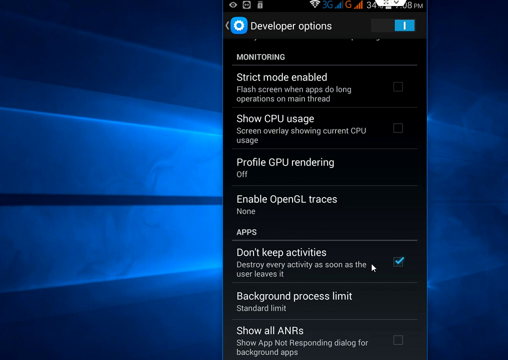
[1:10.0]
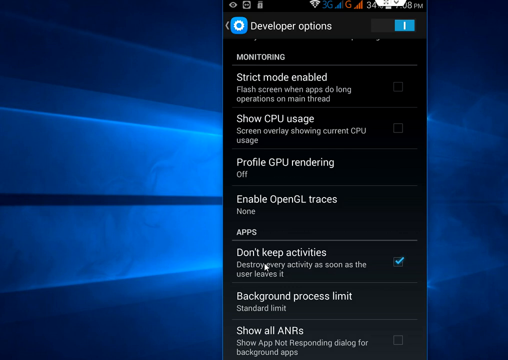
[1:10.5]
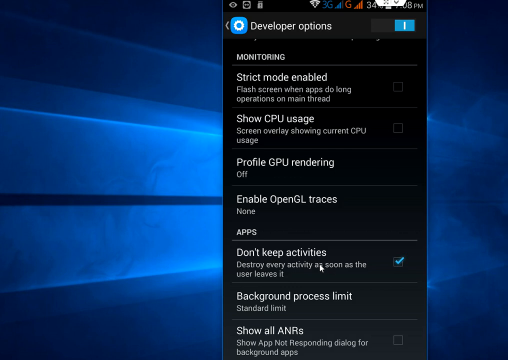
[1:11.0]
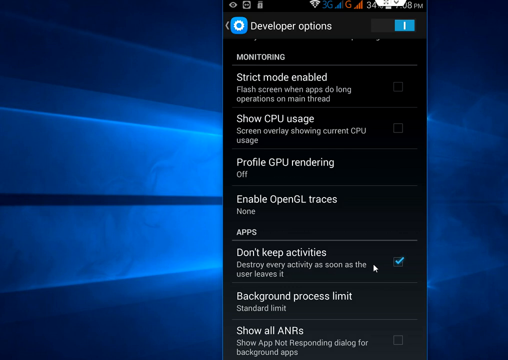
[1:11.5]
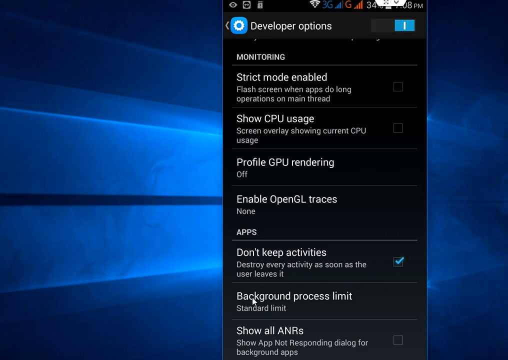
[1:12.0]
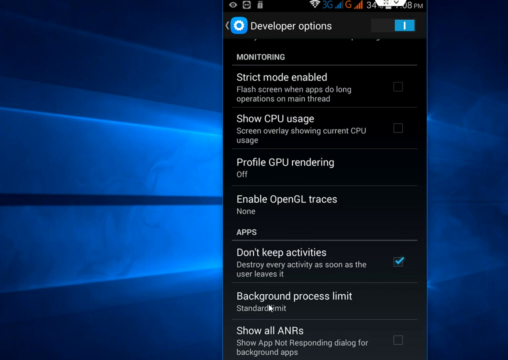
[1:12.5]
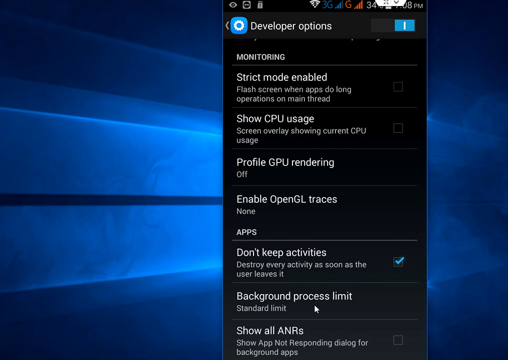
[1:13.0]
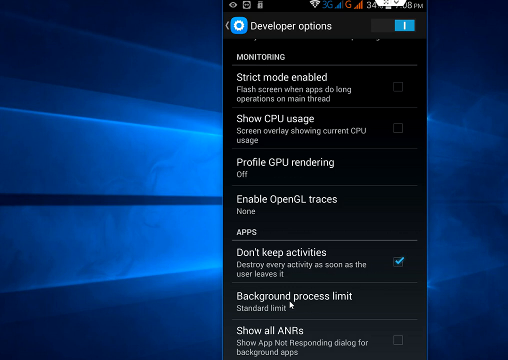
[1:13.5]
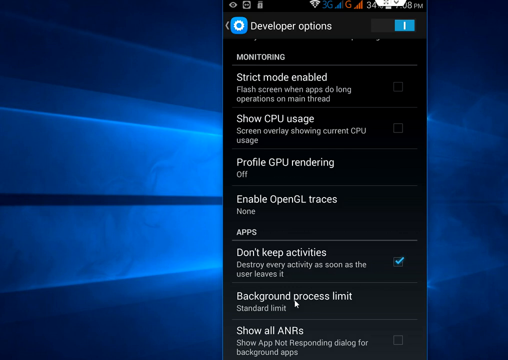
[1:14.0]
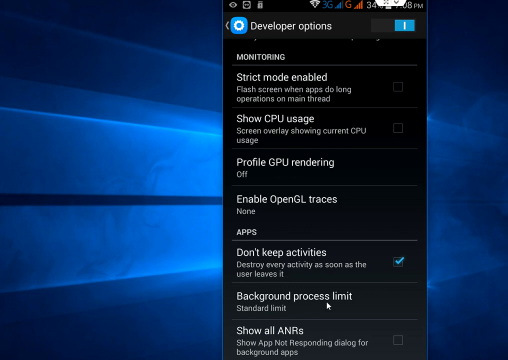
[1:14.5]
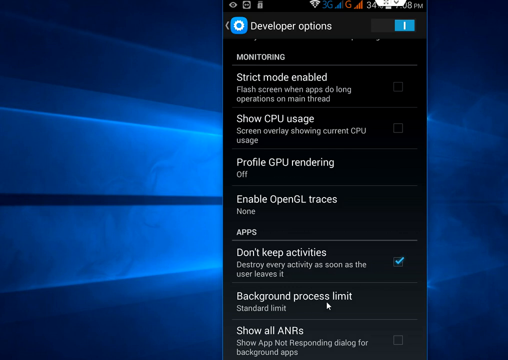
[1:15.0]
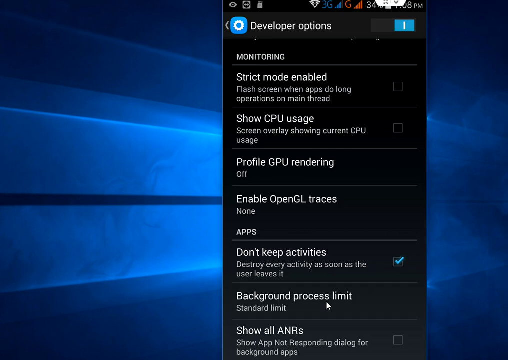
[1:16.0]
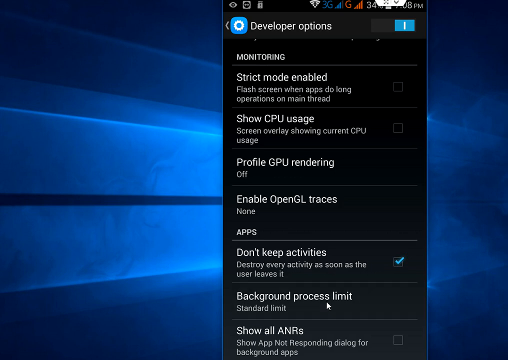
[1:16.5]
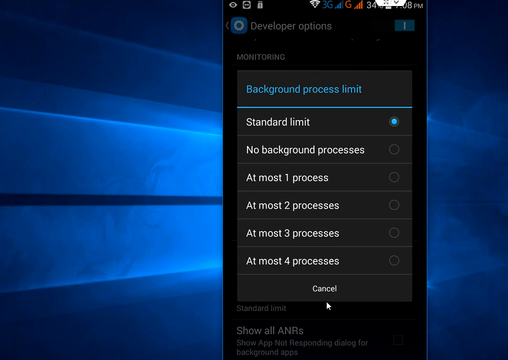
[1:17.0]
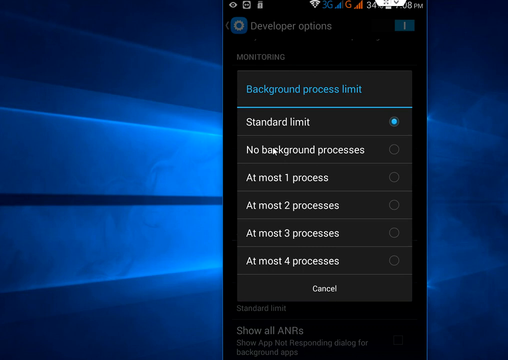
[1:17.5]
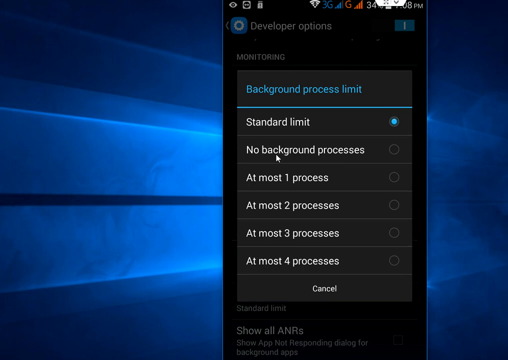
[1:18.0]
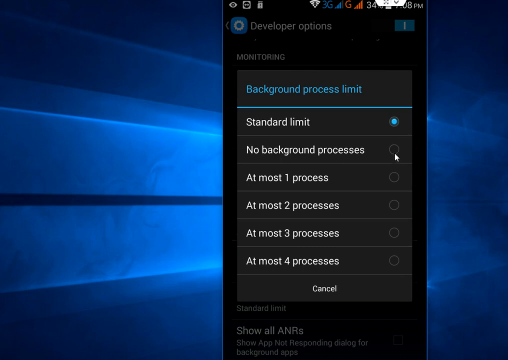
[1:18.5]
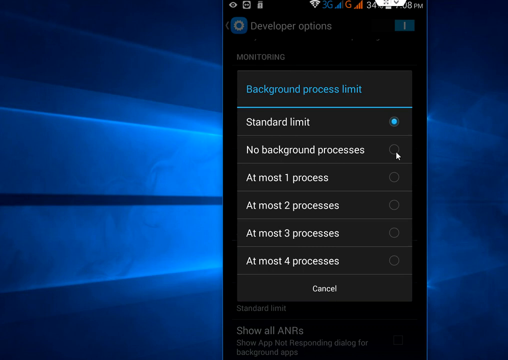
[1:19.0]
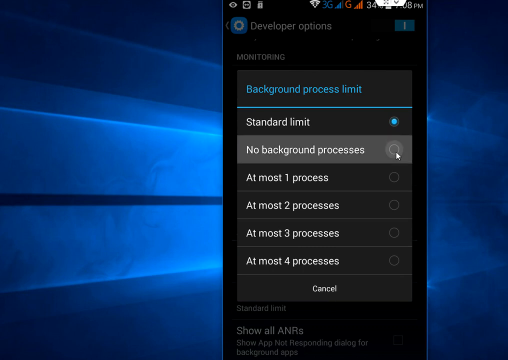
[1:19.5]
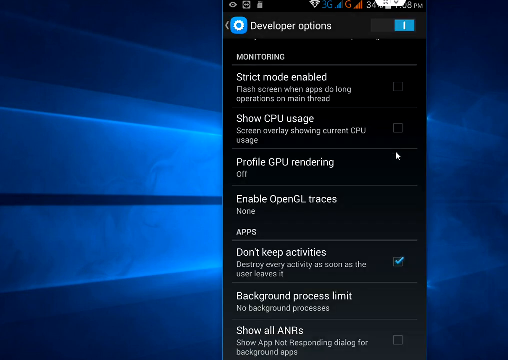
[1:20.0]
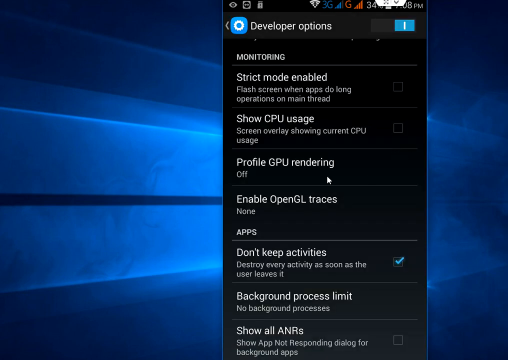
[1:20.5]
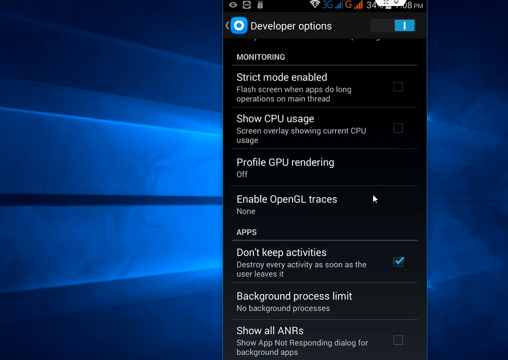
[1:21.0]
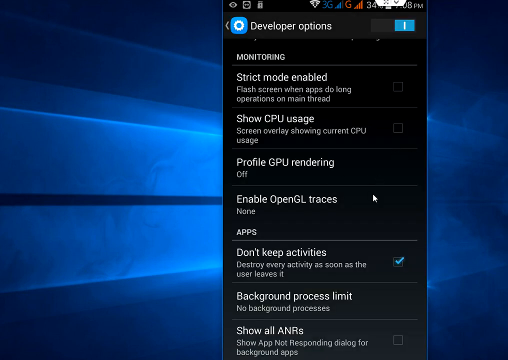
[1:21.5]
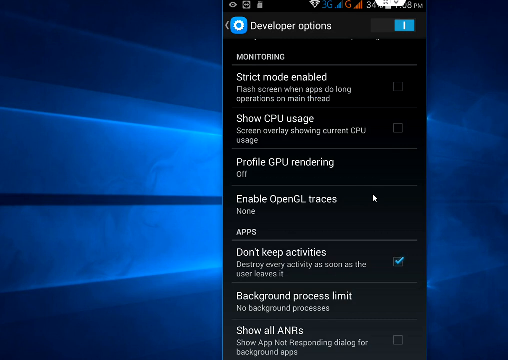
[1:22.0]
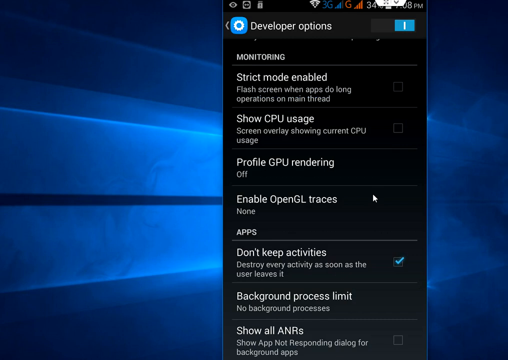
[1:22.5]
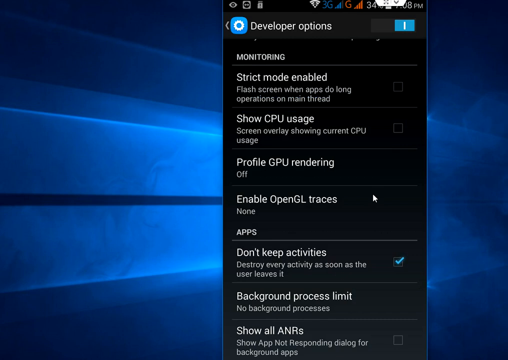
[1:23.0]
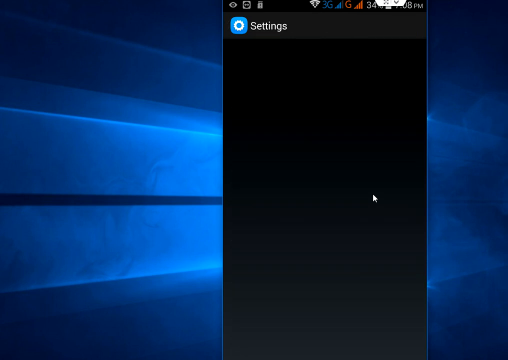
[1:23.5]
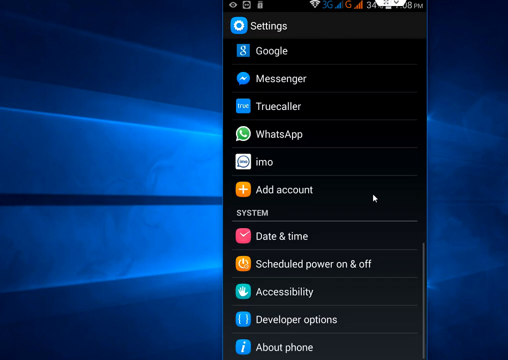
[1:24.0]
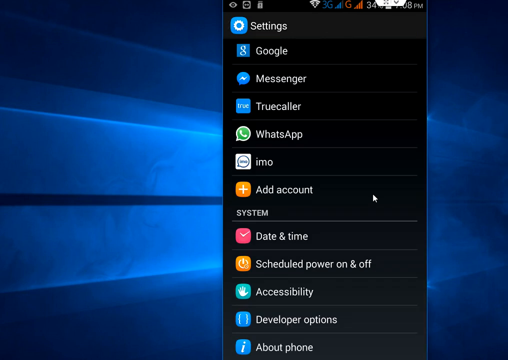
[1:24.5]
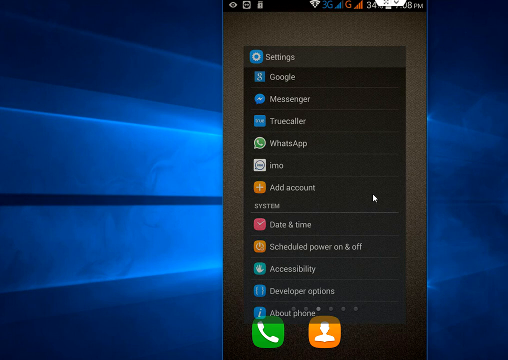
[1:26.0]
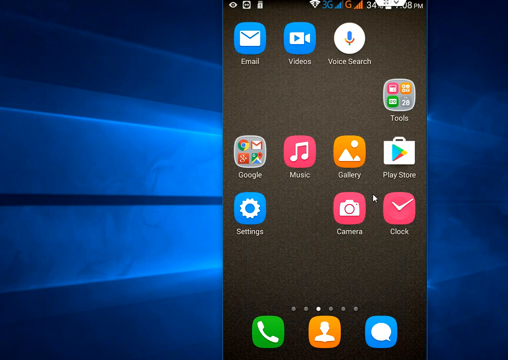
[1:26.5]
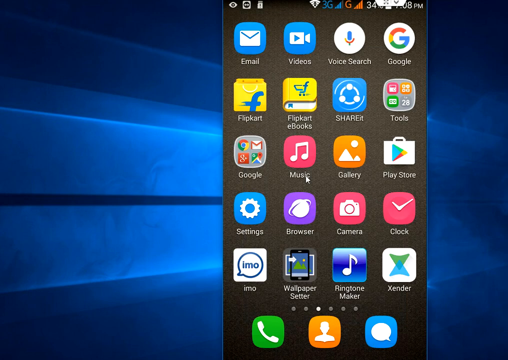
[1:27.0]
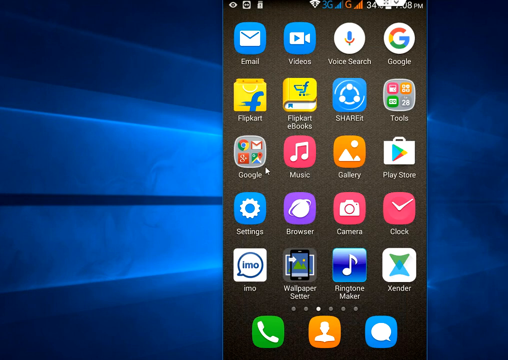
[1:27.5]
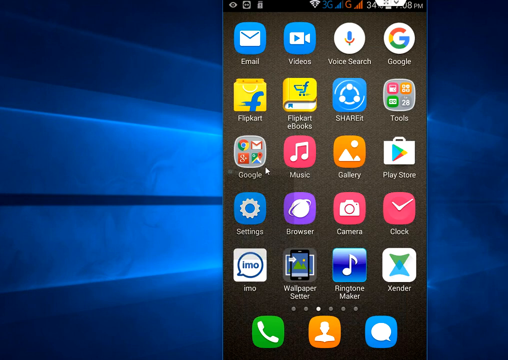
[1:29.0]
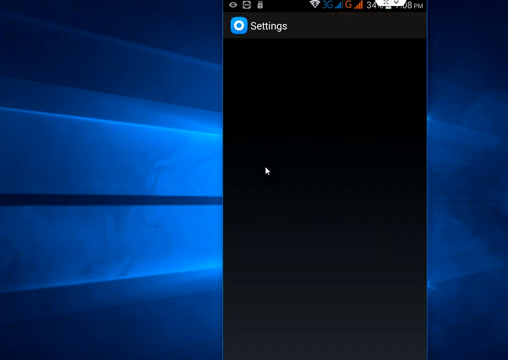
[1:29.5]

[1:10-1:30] On the same part of the page, the cursor moves along the don't keep activities subheading again, then down to background process limit, passing over it briefly as if reading it, and clicks that option. A lighter black submenu appears in the middle of the interface, taking up a good portion of the screen. Its heading is "background process limit," with a blue line beneath it, followed by the options standard limit, no background processes, at most one process, at most two processes, at most three processes and at most four processes. To the right of each option is a bubble, and by default the bubble next to standard limit is filled in. Beneath all the options, in the middle, is the word "cancel." The cursor moves over "No background processes," then over to its bubble, and clicks it. The person then clicks out of the developer menu and is back on the Settings menu, which then closes, returning to the initial interface with all the apps.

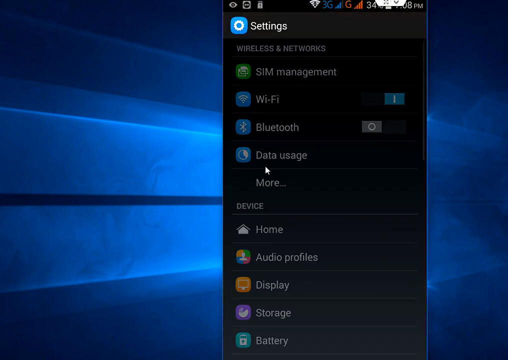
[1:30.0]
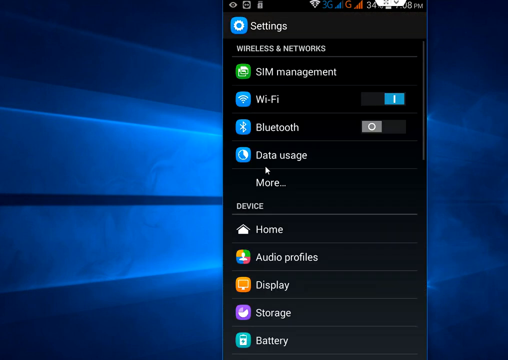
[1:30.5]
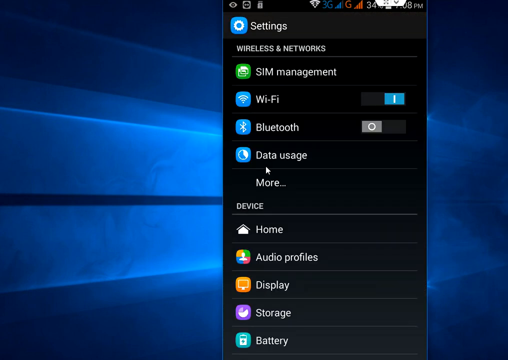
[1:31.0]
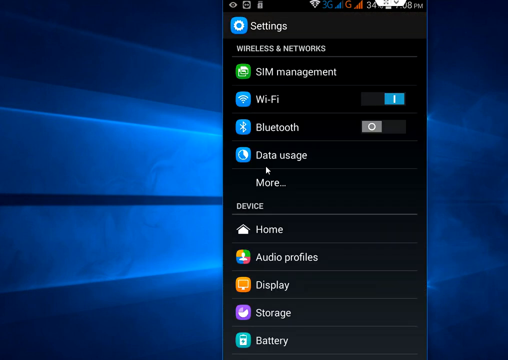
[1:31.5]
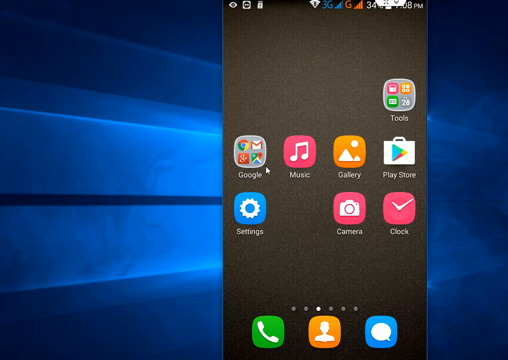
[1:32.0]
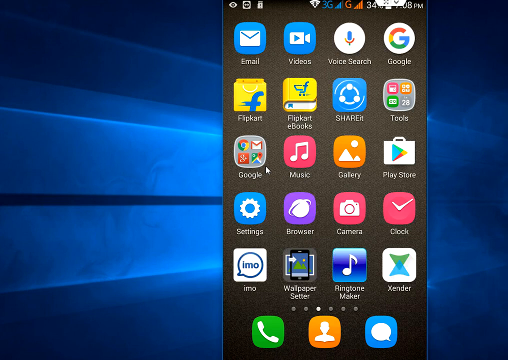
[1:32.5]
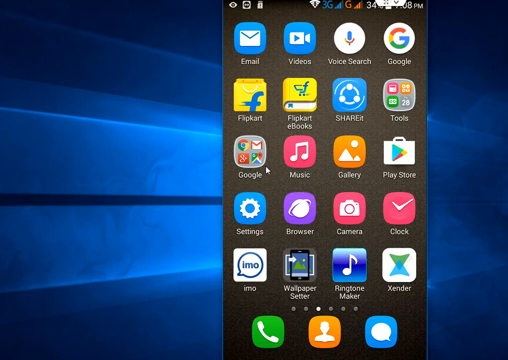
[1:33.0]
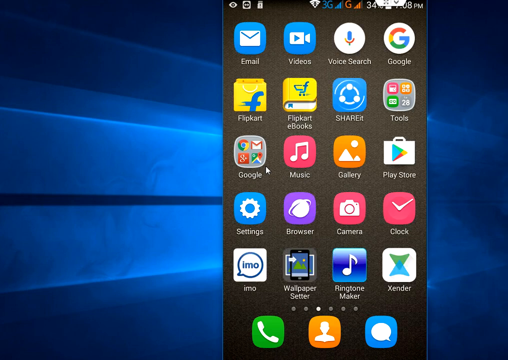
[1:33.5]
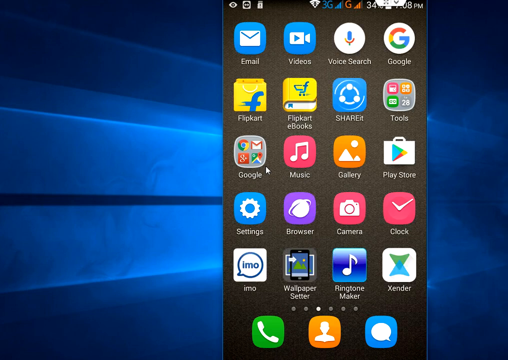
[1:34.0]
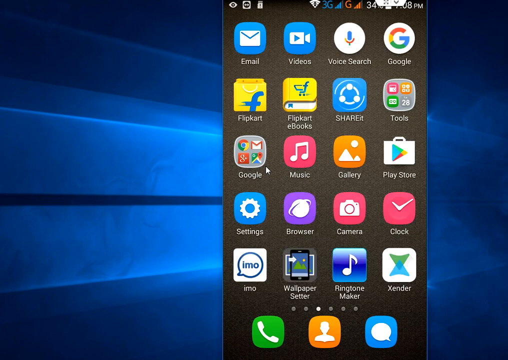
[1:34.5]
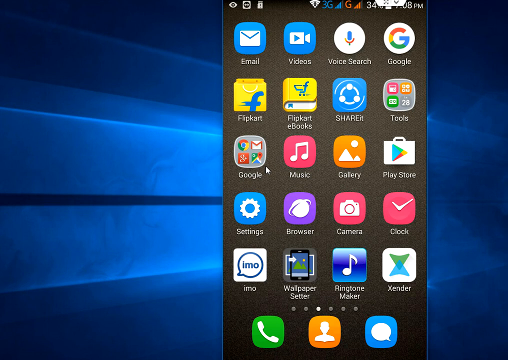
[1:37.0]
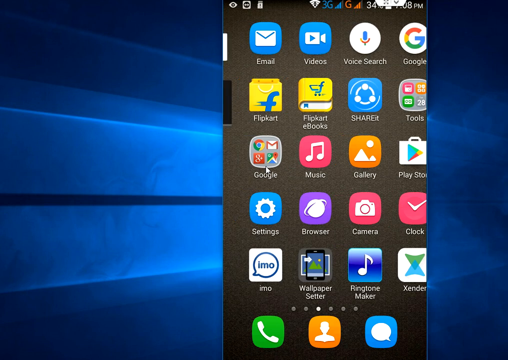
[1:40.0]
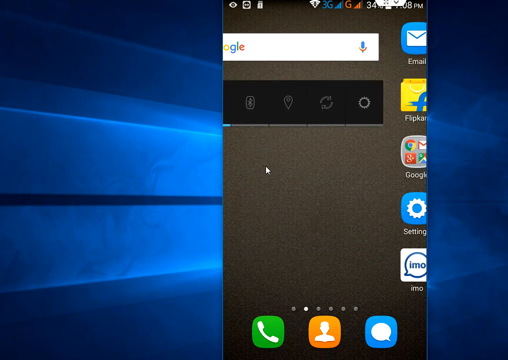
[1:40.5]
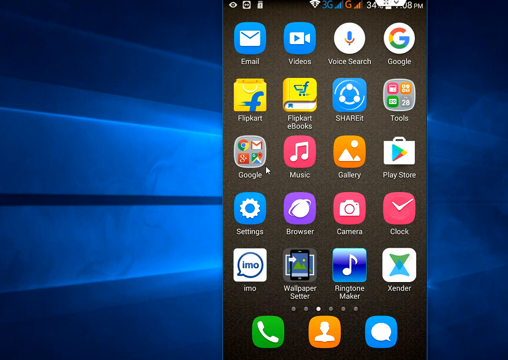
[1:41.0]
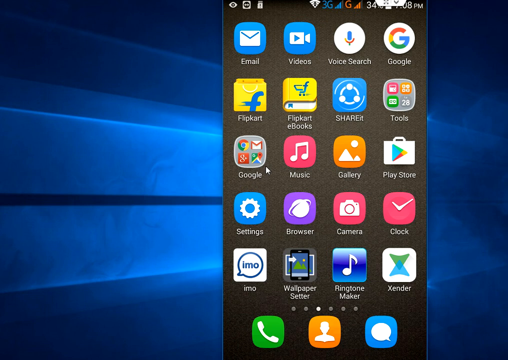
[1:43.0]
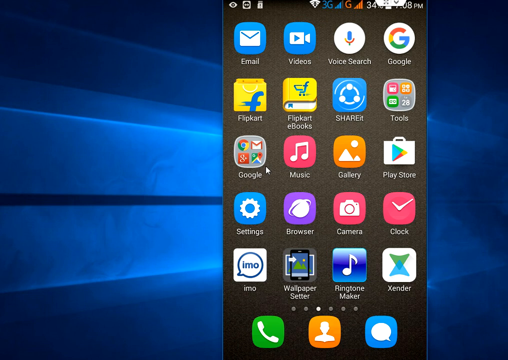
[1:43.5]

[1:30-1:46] The Settings menu shows very briefly, and then the home page returns with all the app icons showing: the 20-icon grid and the three icons below it for phone, contacts and messages. The screen stays on this icon menu for a few seconds, with the mouse slightly below and to the right of the Google folder. The icons are then briefly slid to the right, revealing the Google search bar at the very top, a white rectangle with the Google logo on the very left and the microphone on the very right. Under it is a black rectangle divided into five equal sections, each with an icon in the middle: Wi-Fi, Bluetooth, a map marker, reload and a settings gear. The Wi-Fi icon is highlighted, with a blue line underneath it. The view then flips back to the home page with all the app icons displayed, and the cursor still remains below and to the right of the Google folder.